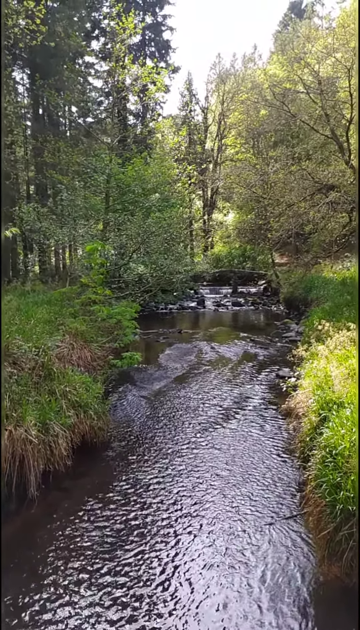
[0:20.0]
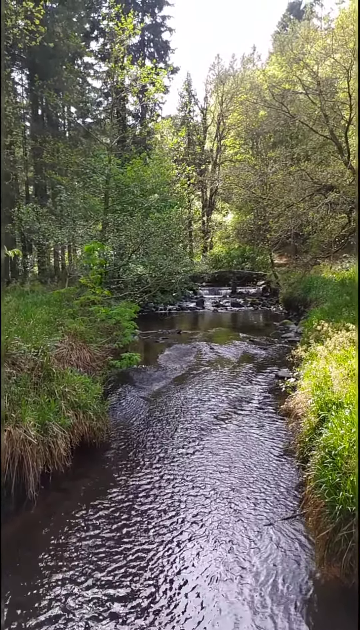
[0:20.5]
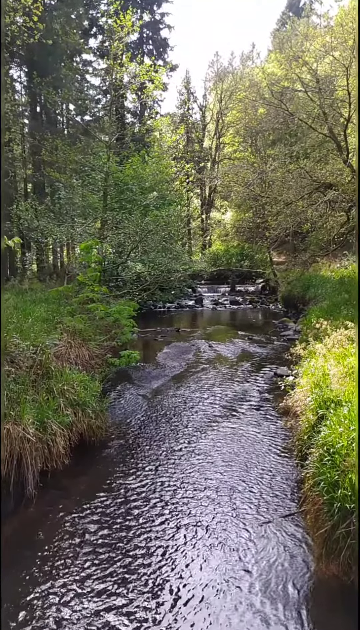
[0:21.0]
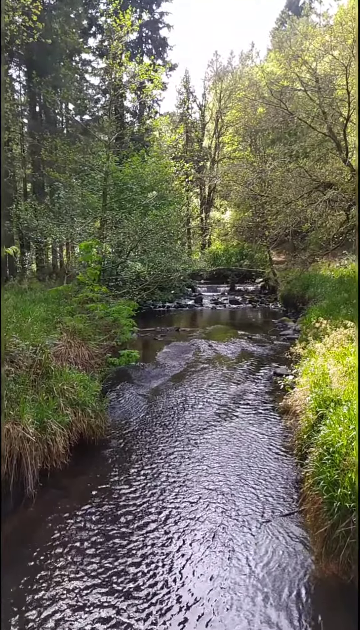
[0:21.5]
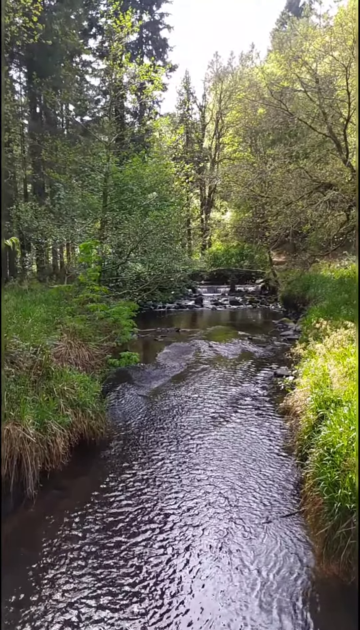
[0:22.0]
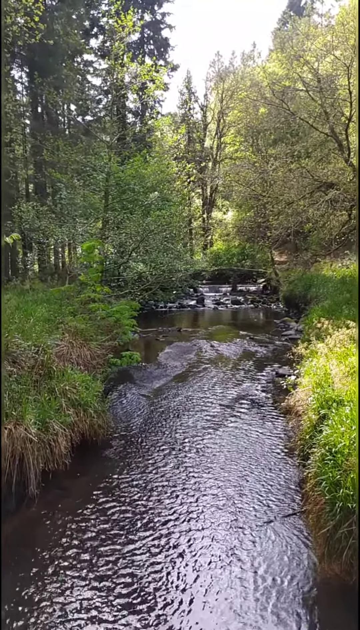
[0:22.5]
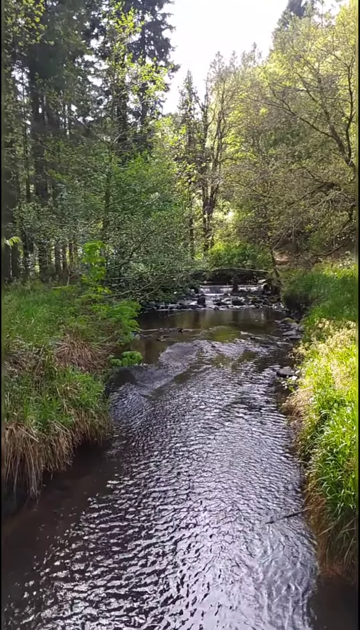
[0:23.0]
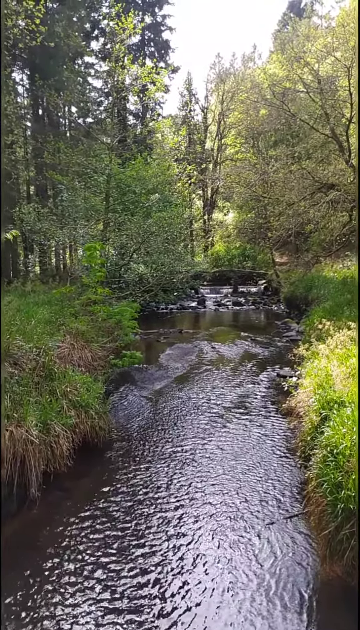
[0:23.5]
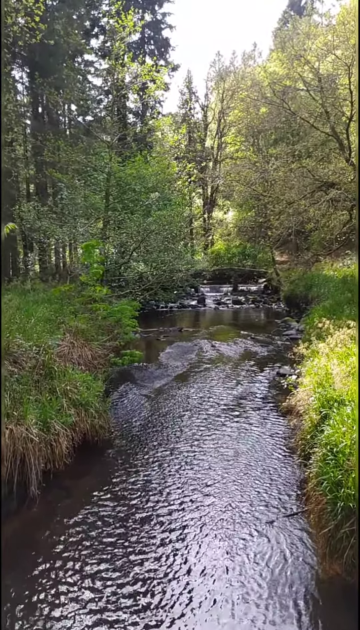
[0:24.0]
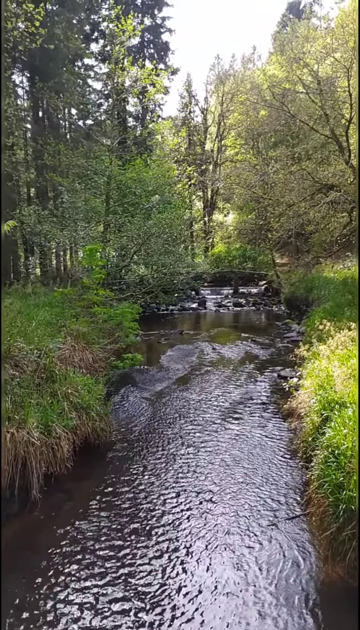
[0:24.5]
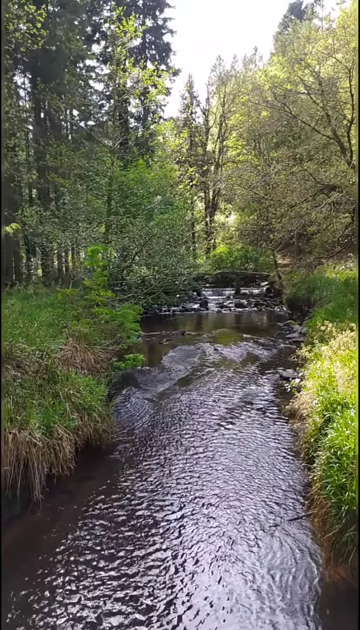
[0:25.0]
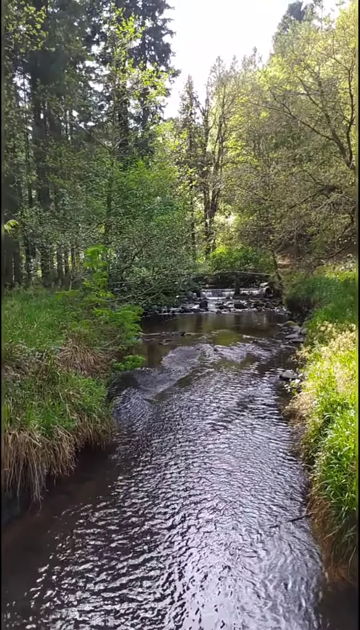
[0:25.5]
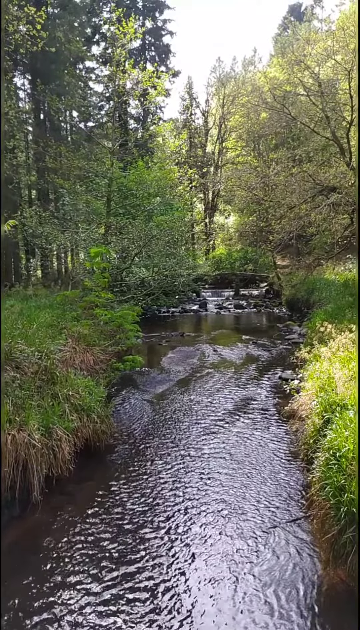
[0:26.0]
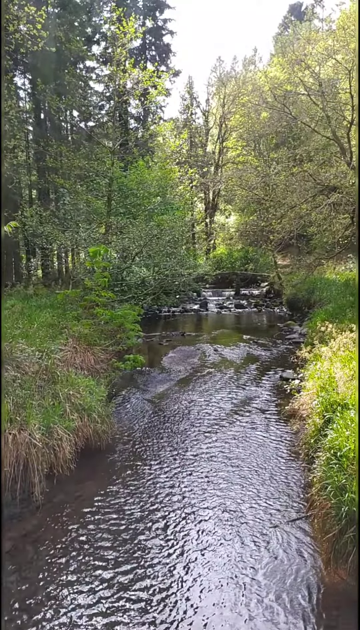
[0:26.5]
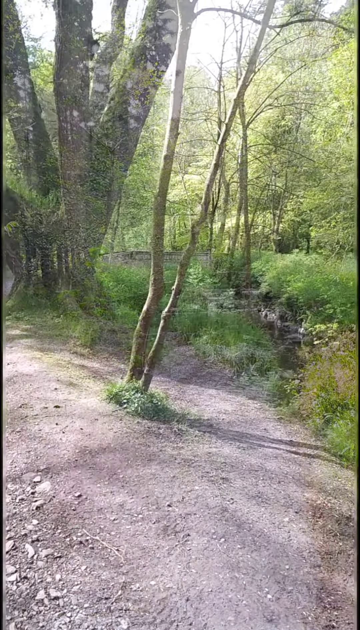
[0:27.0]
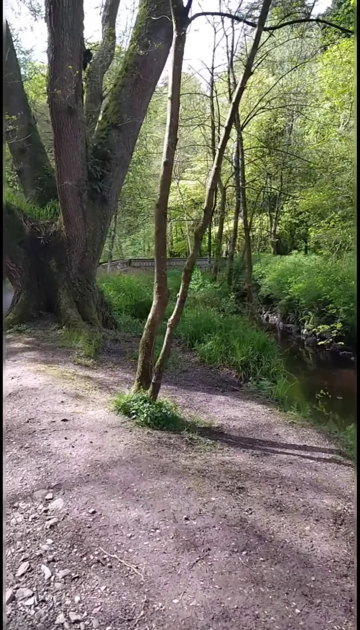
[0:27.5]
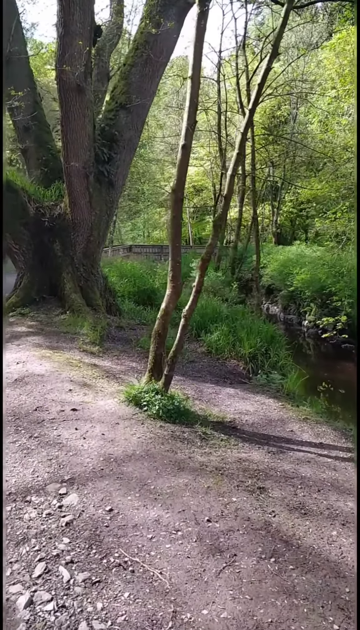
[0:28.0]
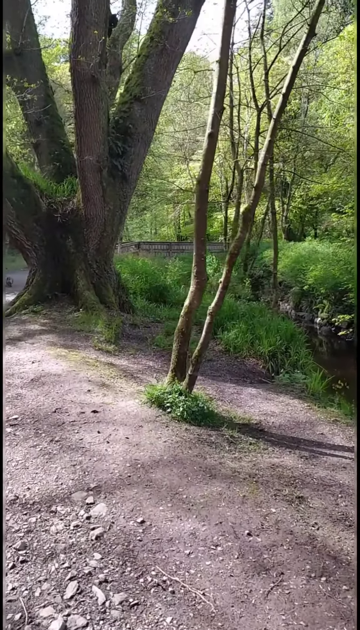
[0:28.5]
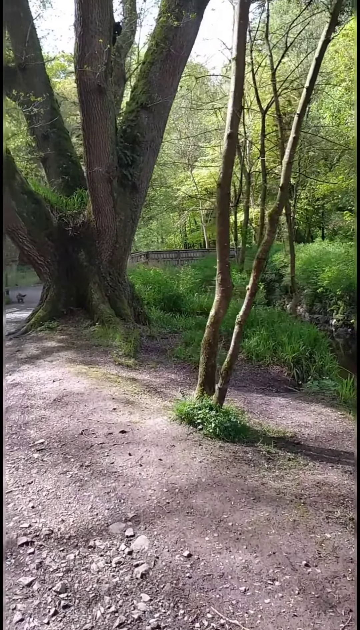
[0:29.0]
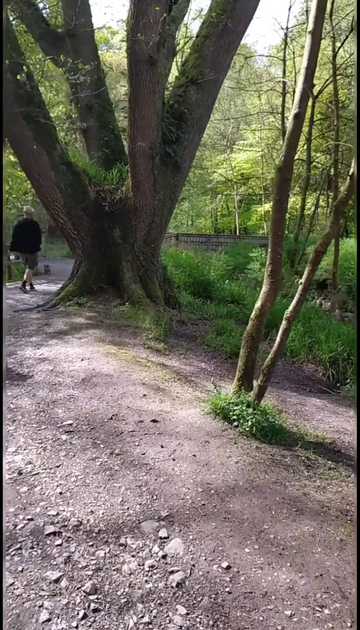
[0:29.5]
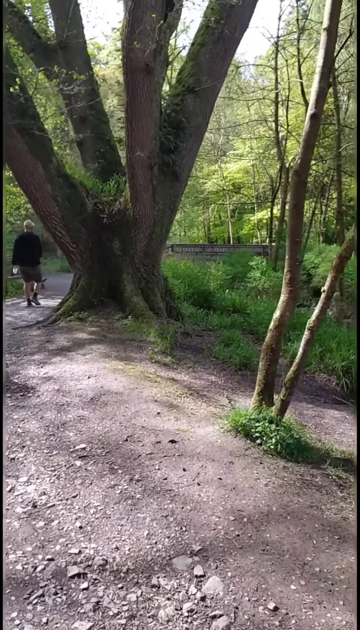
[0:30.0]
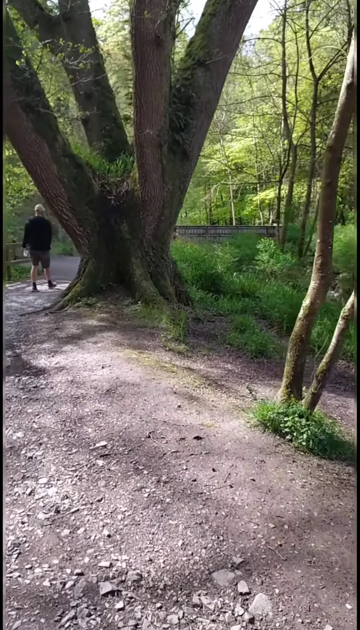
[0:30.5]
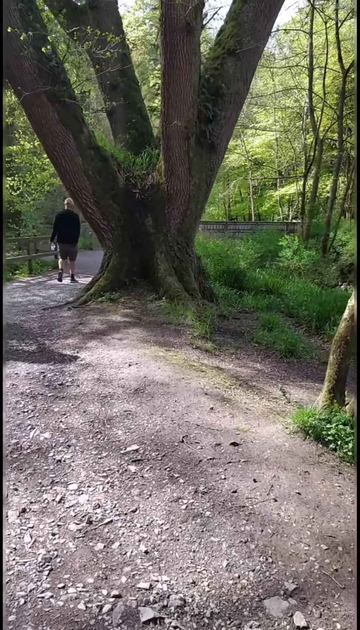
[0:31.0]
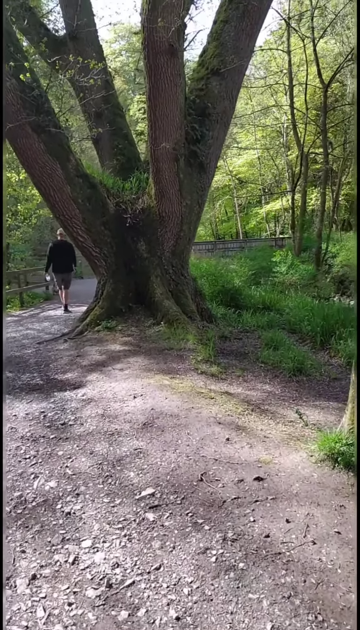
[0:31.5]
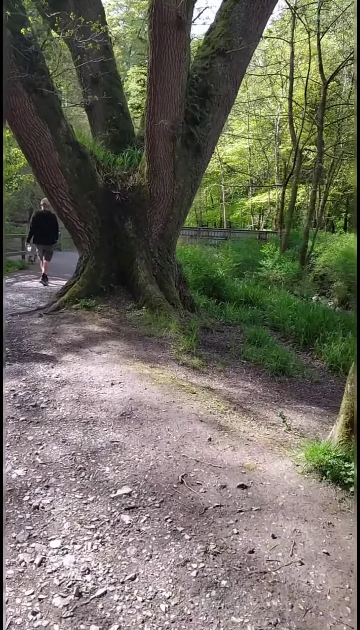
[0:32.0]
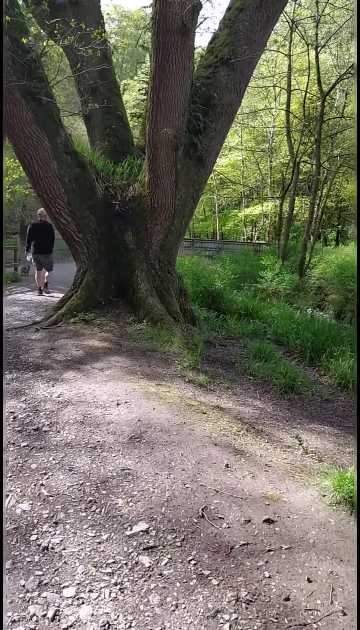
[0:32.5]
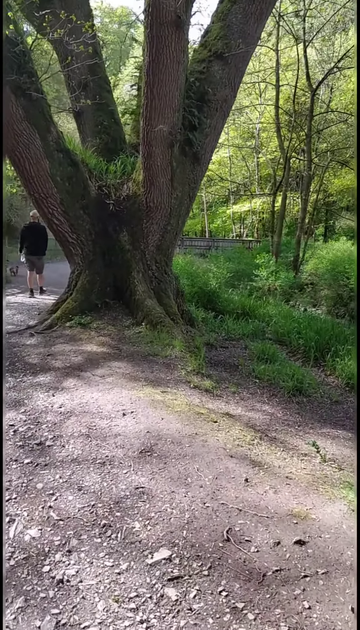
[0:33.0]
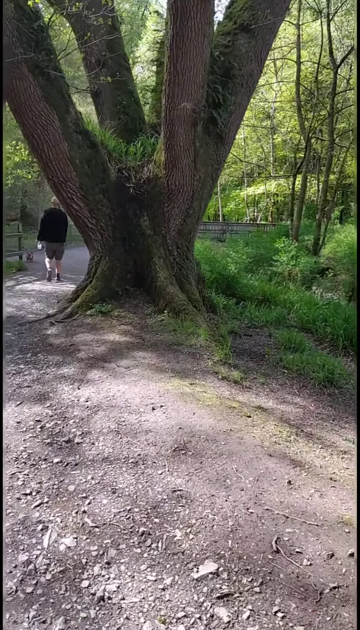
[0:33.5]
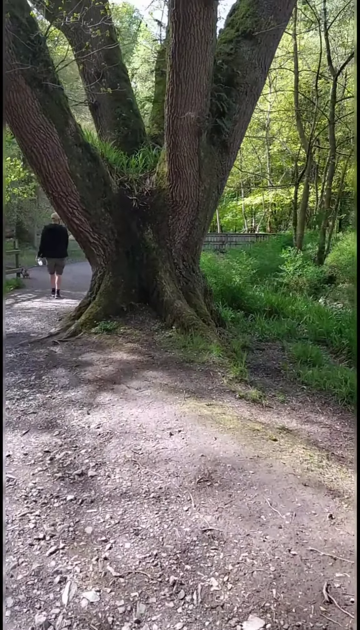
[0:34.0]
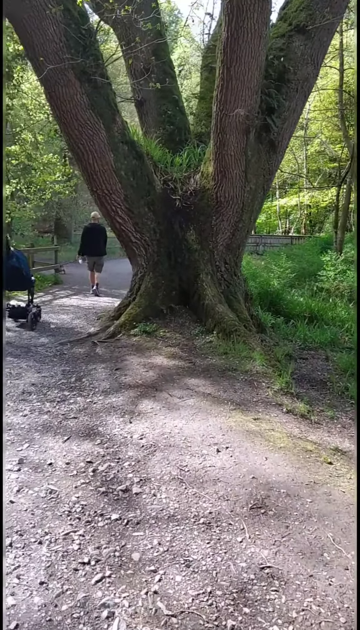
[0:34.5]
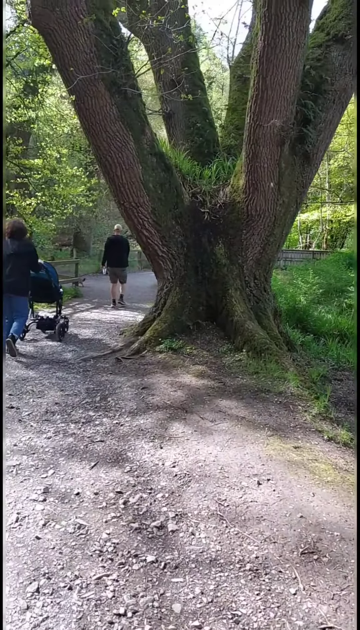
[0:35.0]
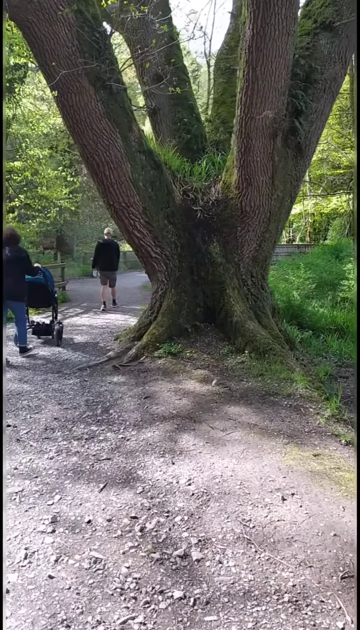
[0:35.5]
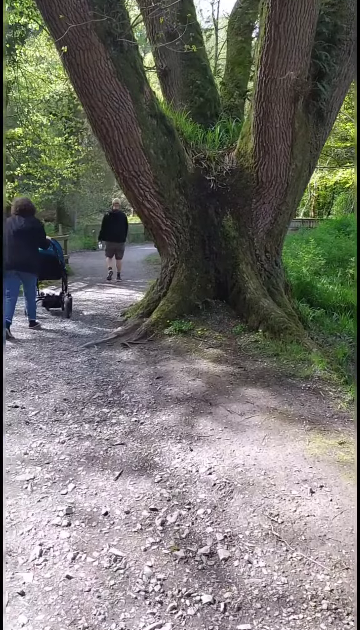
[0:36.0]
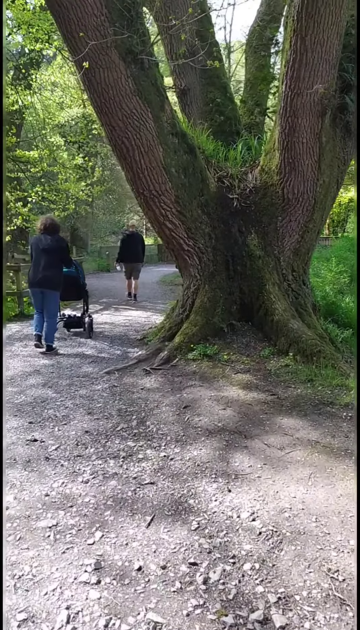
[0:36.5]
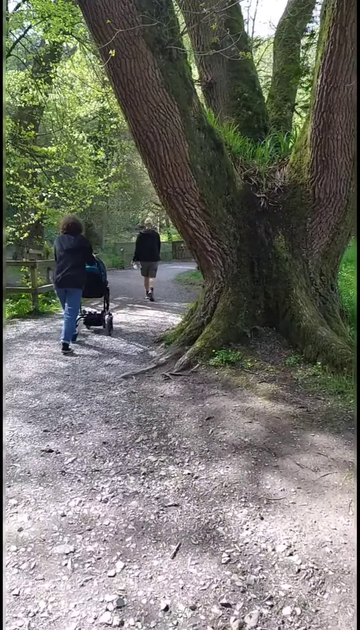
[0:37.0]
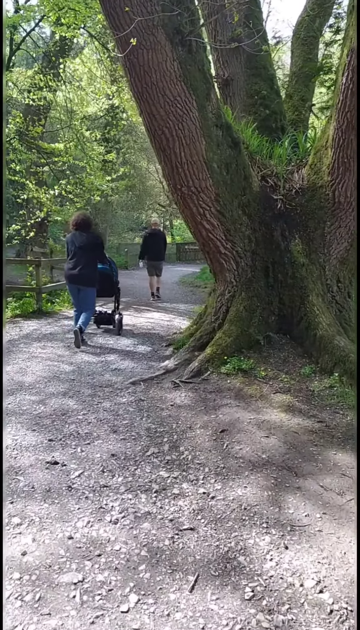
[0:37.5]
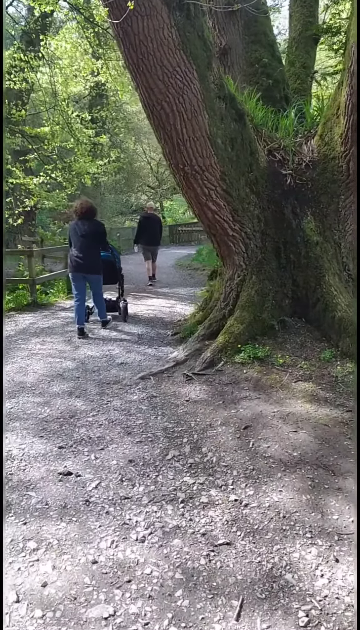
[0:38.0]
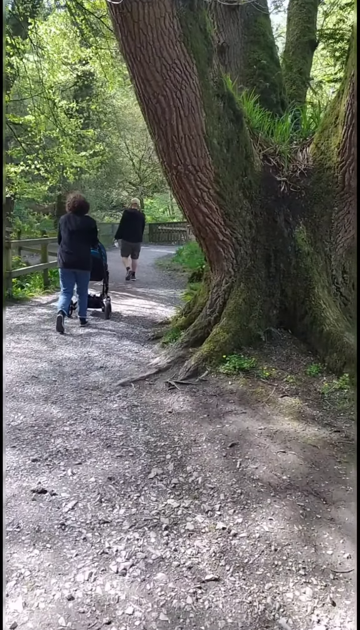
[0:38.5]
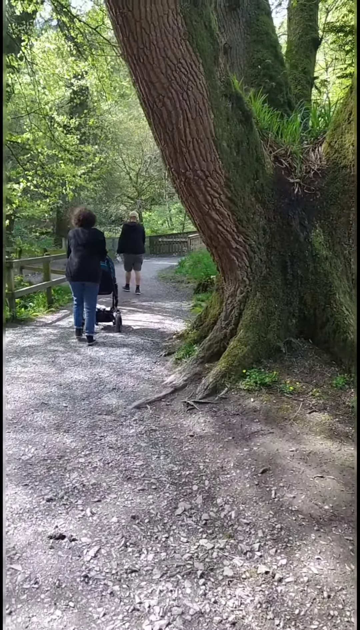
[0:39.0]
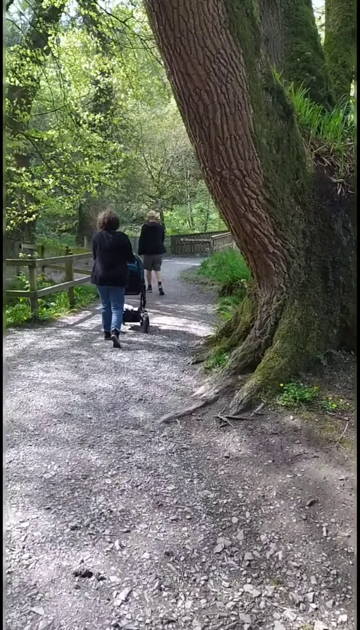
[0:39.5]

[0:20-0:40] The water ripples in the creek as the camera lingers on the scene for a few moments. Another flash transition shows a different location. The creek appears off to the right, but the camera is focused on the trees in the foreground, with mostly bare dirt ground below. In the center is one wishbone-shaped tree with very thin branches, and to its left is a much larger tree that branches off in four directions and is covered in thick moss. The person filming walks along, the camera bobbing, heading toward the left of the large tree. Two people ahead of them walk along the trail beside the tree; one of them appears to be pushing a baby carriage in front of them. The shot ends as the person holding the camera gets close to the tree.